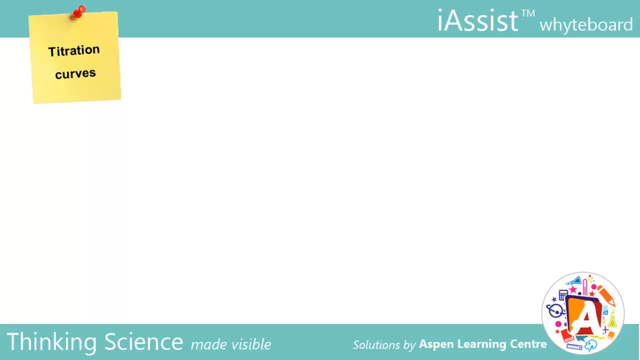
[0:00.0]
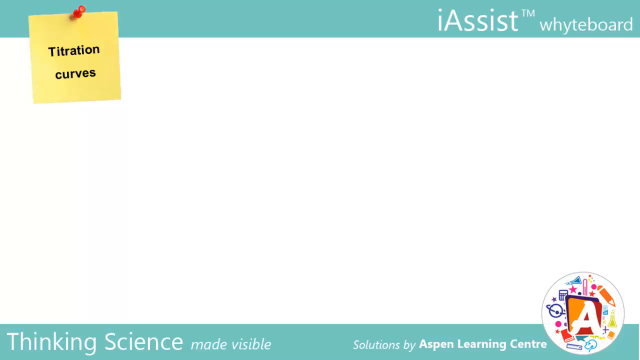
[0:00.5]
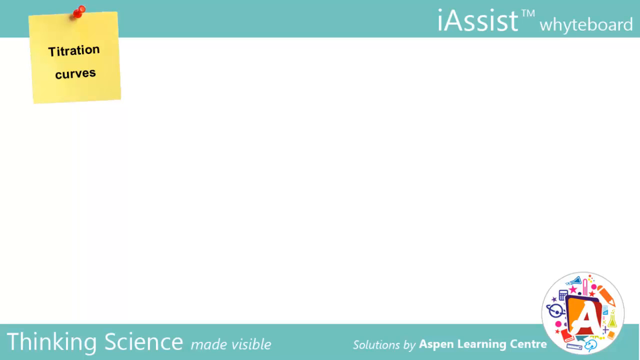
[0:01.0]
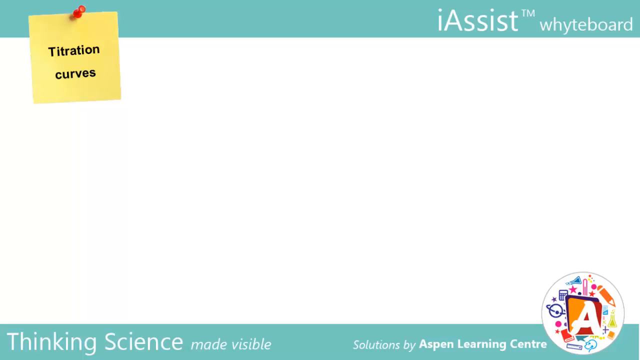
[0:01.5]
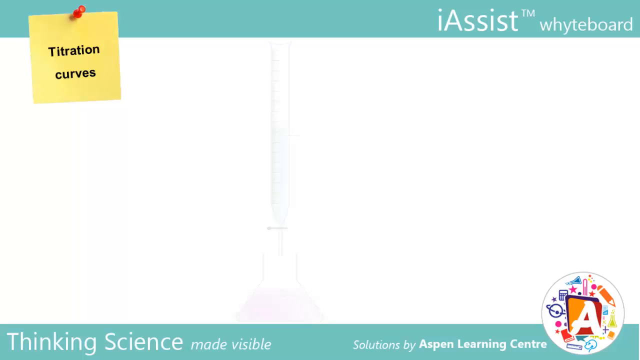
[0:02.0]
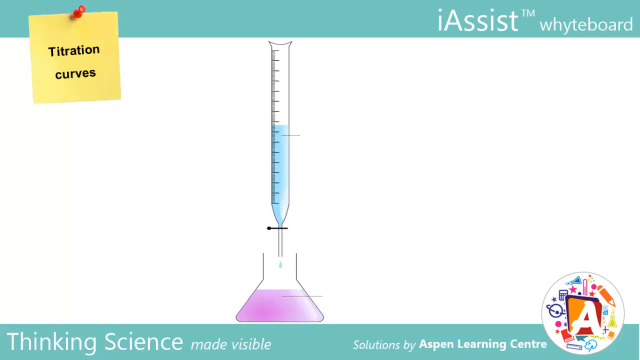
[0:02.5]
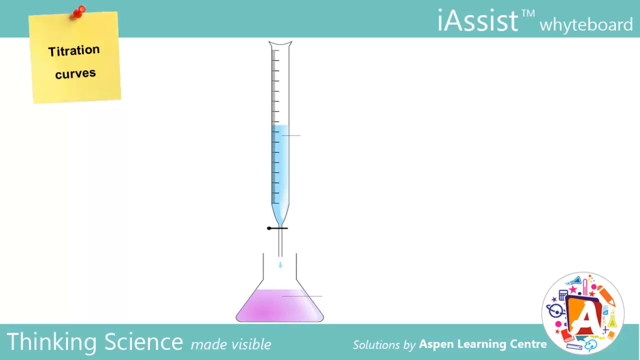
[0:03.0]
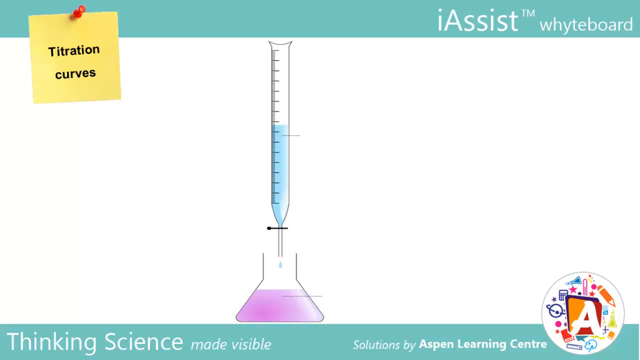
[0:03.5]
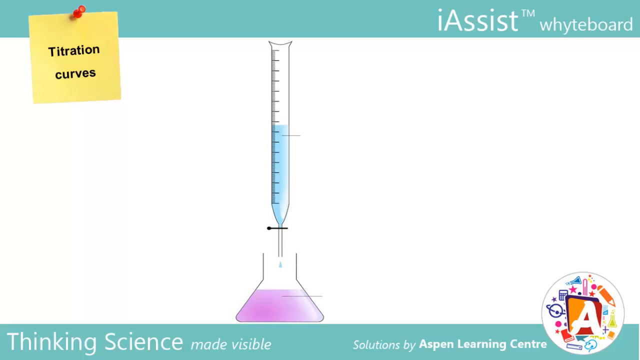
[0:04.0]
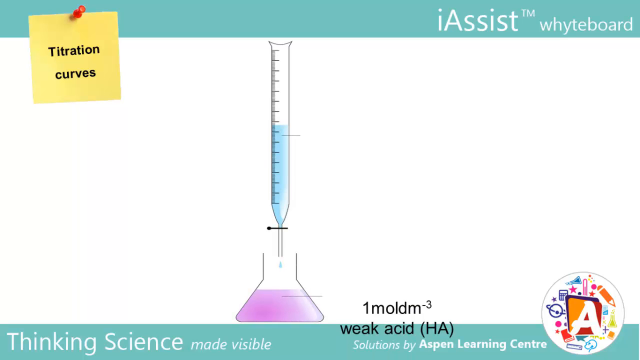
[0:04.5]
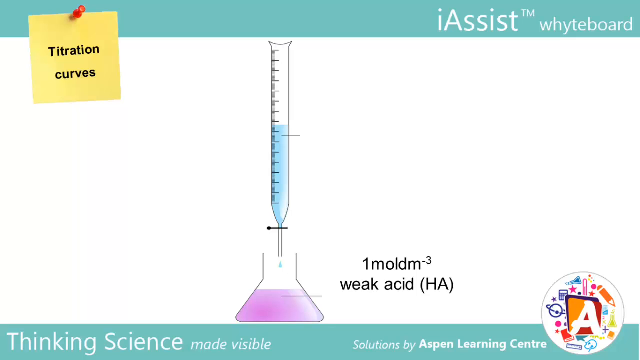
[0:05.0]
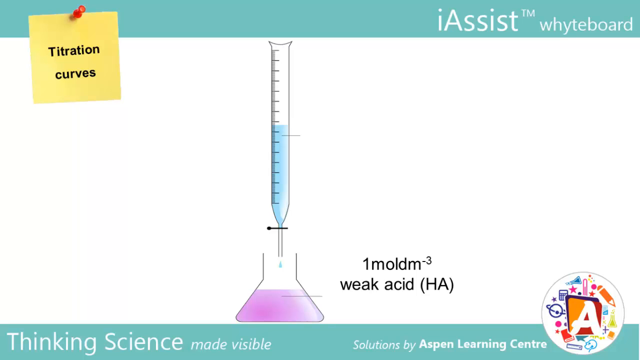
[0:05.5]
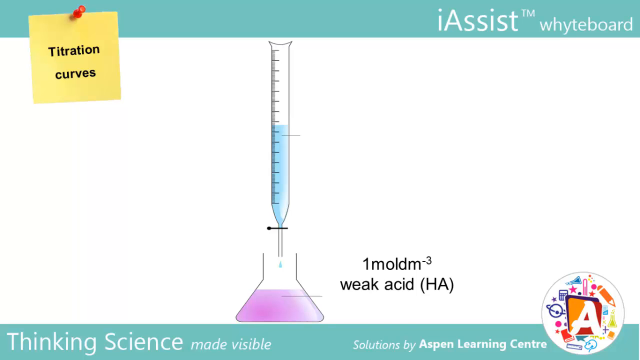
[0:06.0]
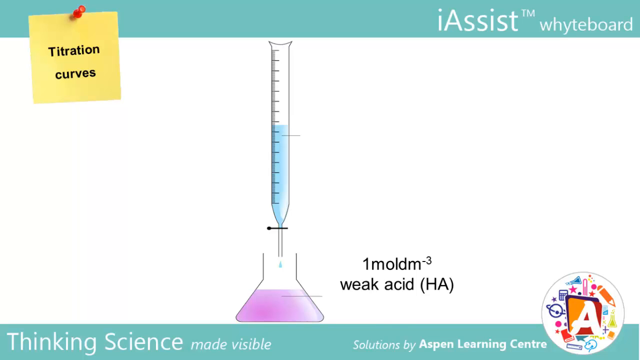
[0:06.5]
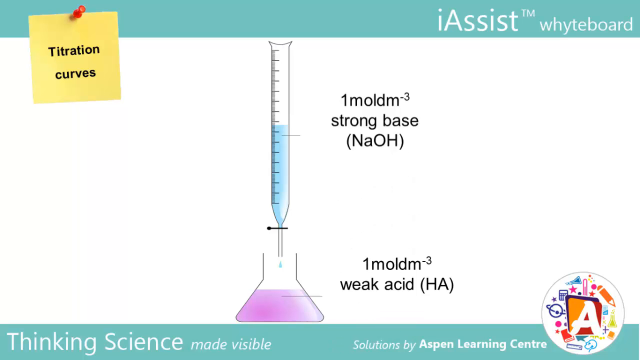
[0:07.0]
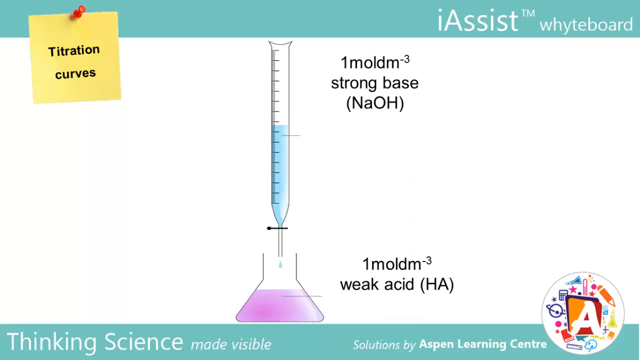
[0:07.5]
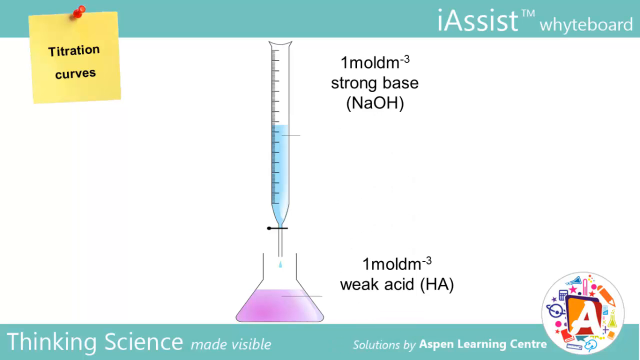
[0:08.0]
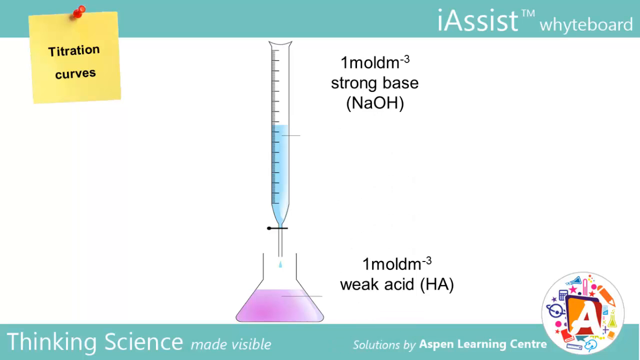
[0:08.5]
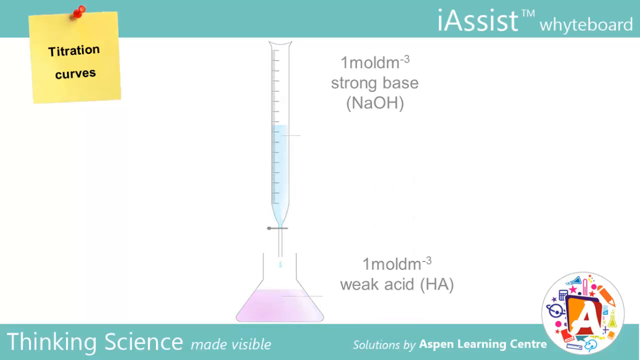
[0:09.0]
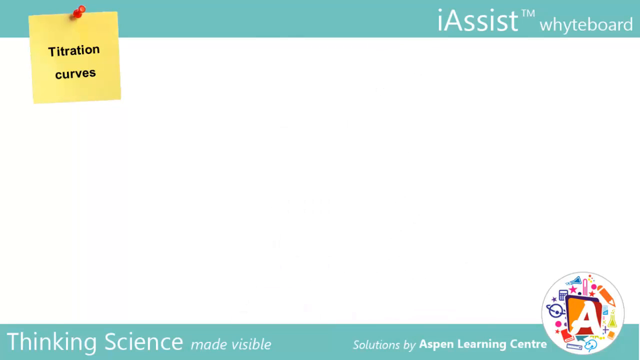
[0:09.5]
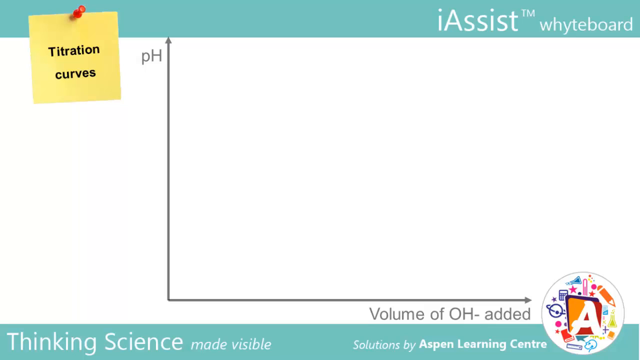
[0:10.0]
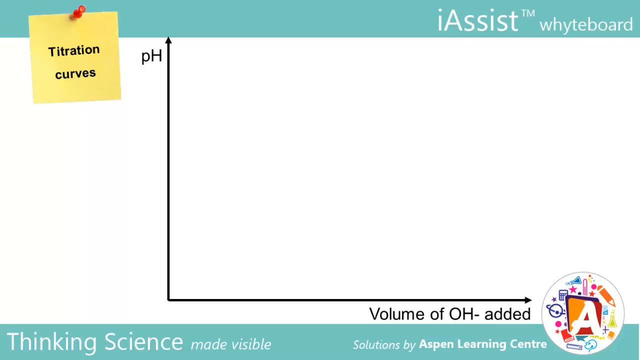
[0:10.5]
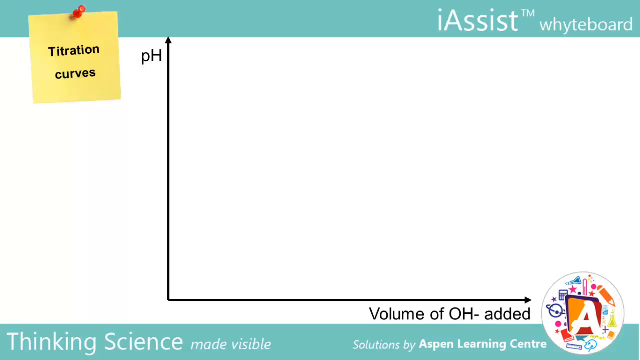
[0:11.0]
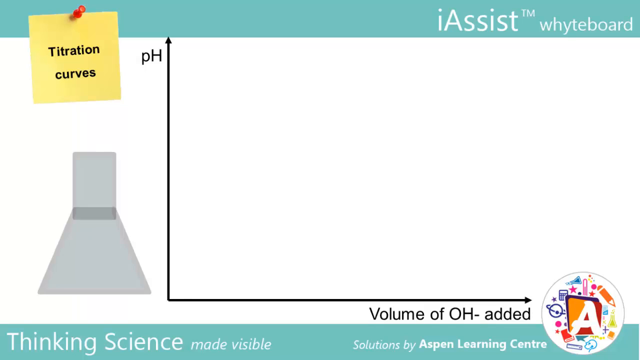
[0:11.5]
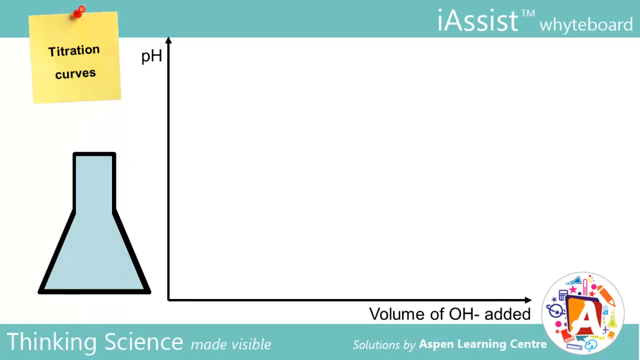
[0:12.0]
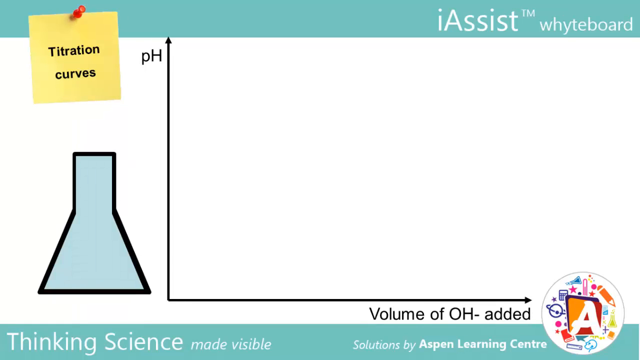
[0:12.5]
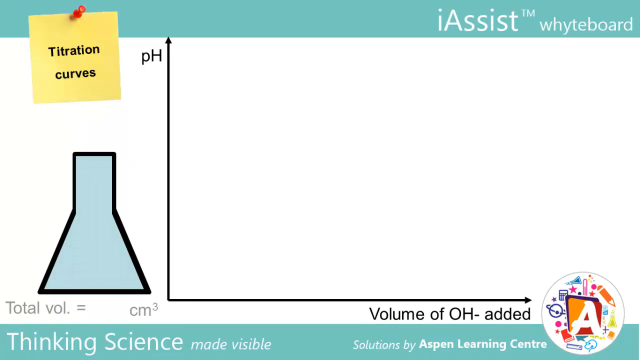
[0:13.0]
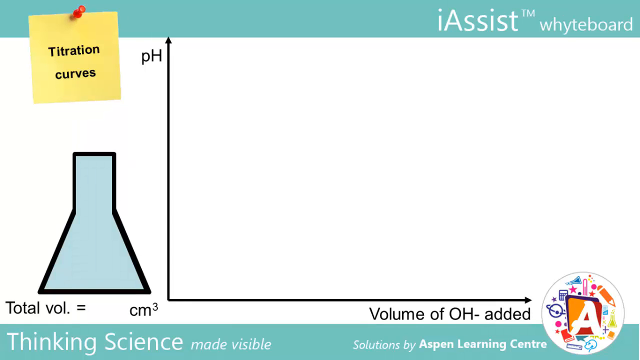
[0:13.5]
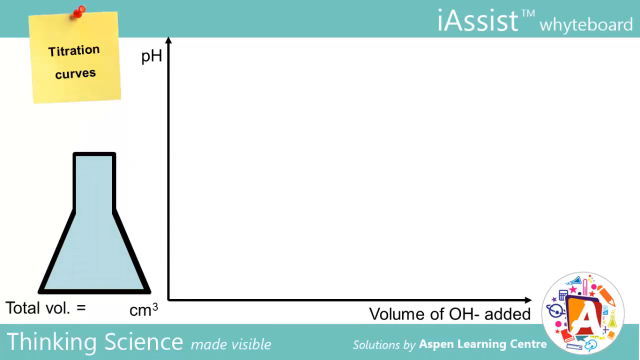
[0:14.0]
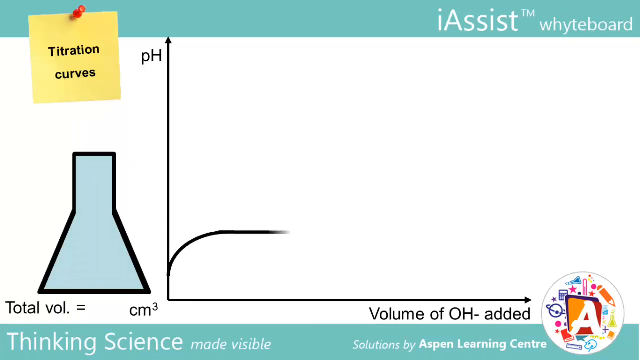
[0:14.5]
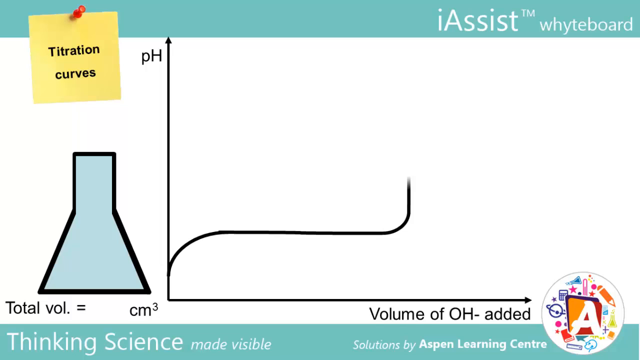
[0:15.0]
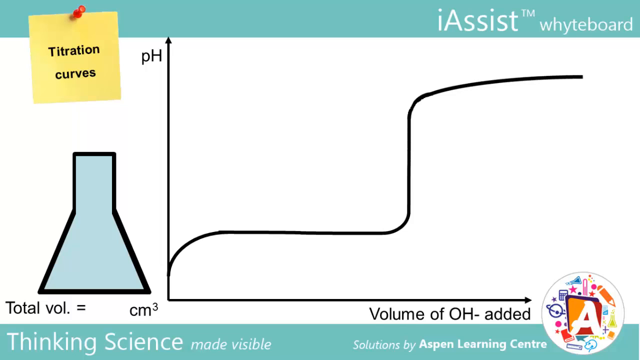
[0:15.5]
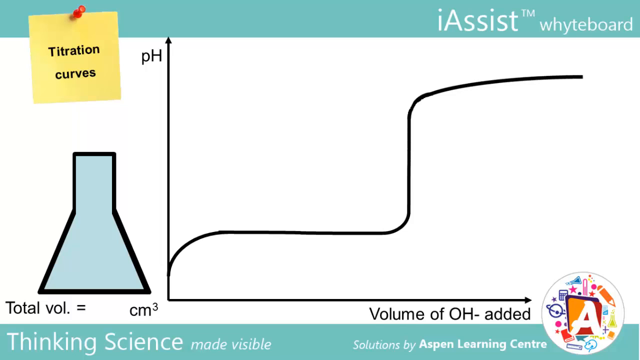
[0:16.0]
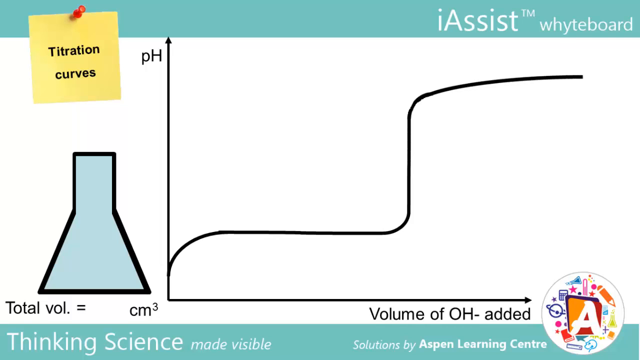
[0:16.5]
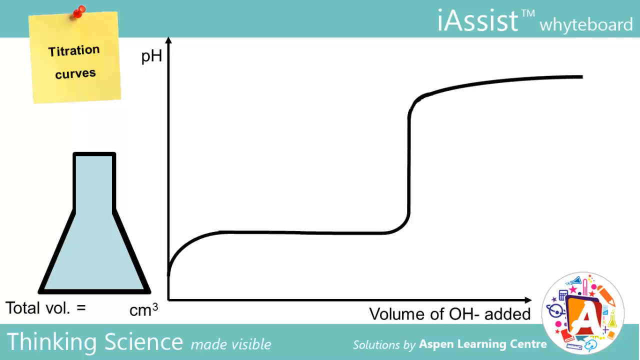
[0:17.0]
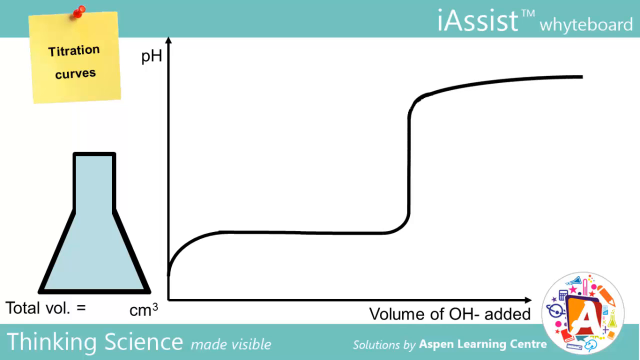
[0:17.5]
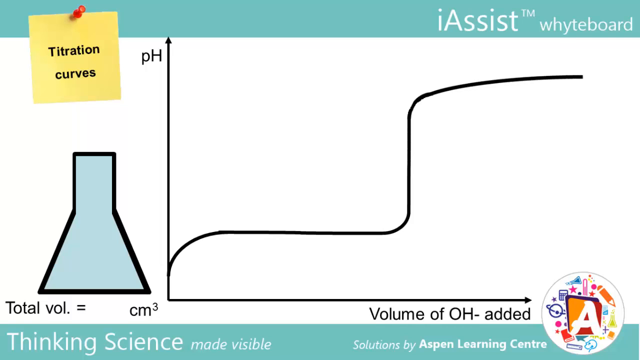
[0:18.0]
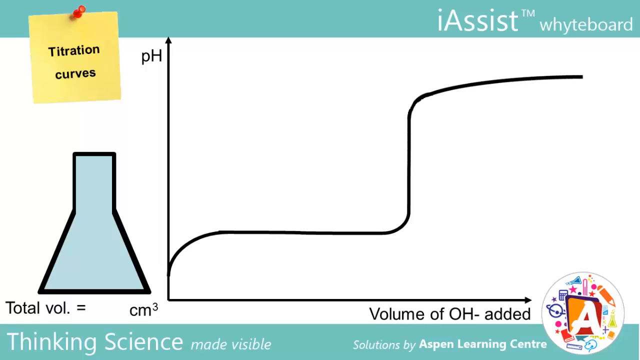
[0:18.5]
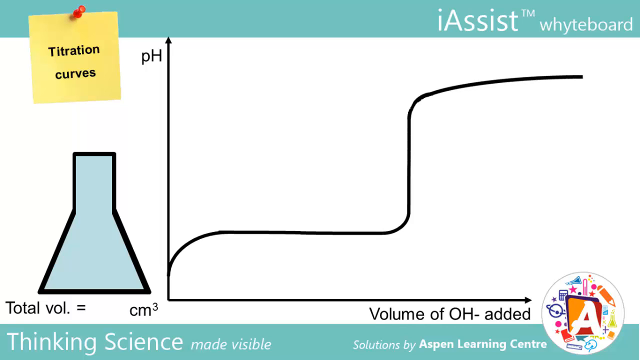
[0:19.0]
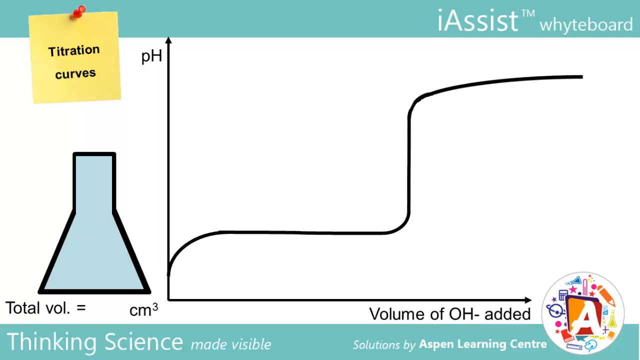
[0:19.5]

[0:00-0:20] The video opens on a white screen with a blue or light blue banner across the top. White words are written at the top right, and in the upper left corner there is the design of a yellow post-it with a red pin, containing two black lines of text. In the center of the frame, in the white space, there are transparent containers holding liquids of different colors: the liquid in one container is light blue, while the liquid in the lower container is pink. Next to these two containers are black lines of text that include chemical formulas. Next, a graph with an x-axis, a y-axis and a black curve is shown. Beside the graph, on the left side of the frame, there is a schematic representation of a container, probably glass, in light blue.